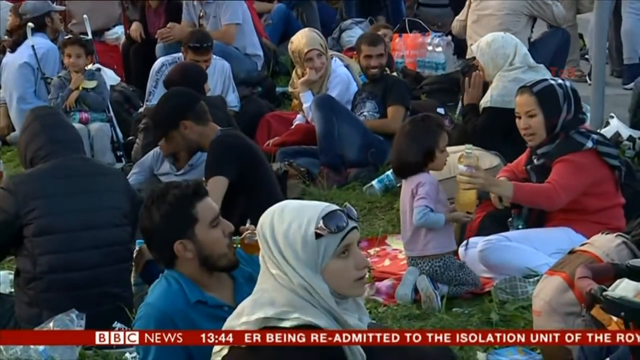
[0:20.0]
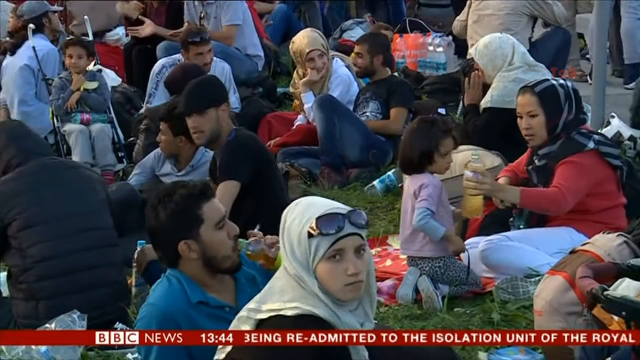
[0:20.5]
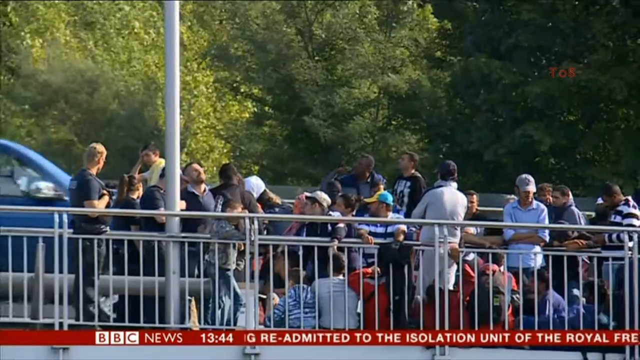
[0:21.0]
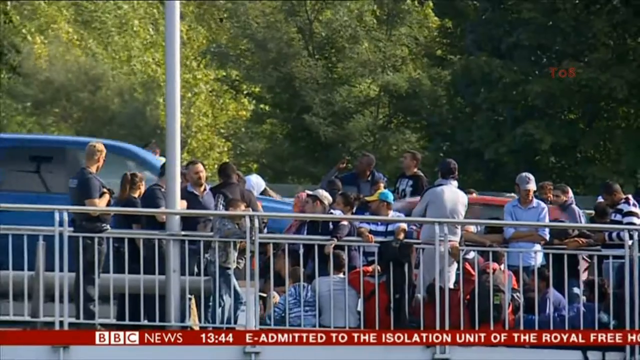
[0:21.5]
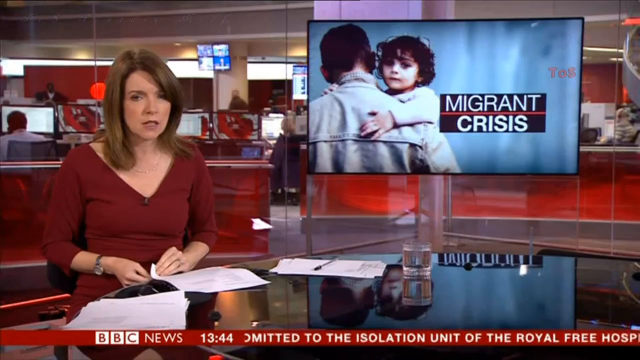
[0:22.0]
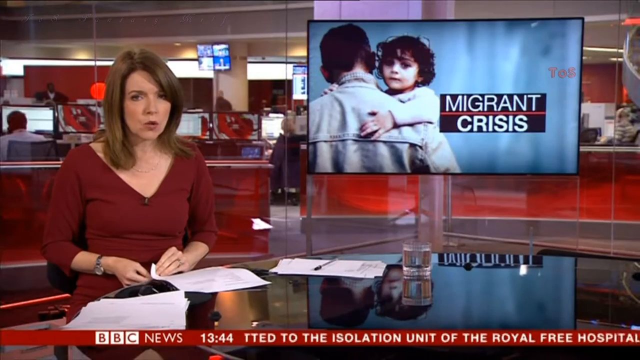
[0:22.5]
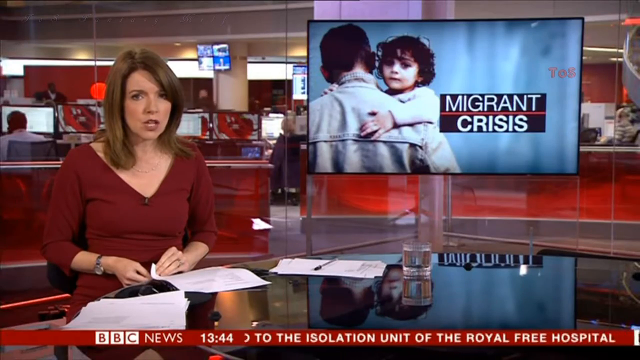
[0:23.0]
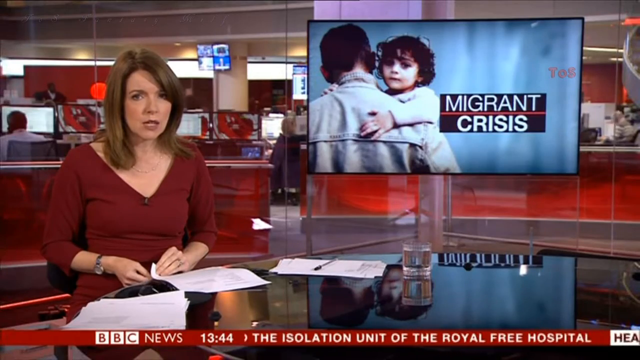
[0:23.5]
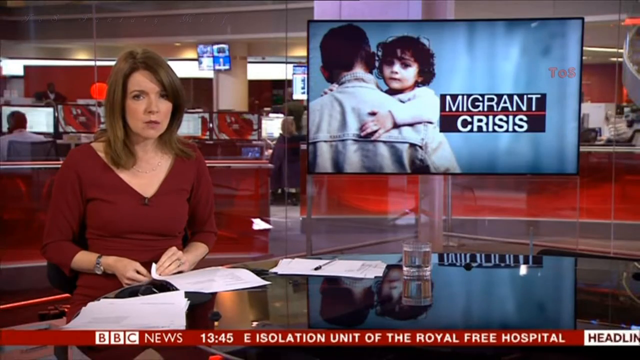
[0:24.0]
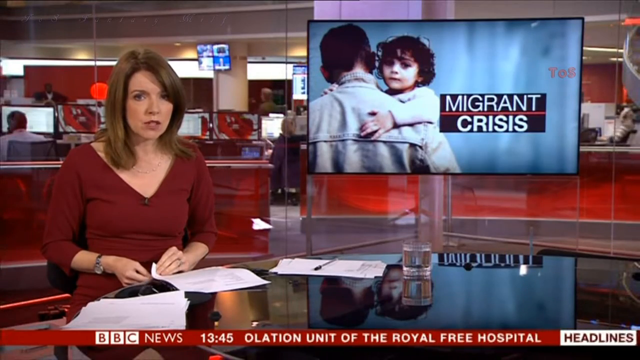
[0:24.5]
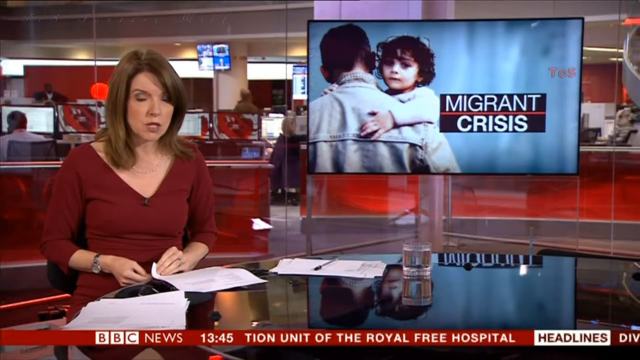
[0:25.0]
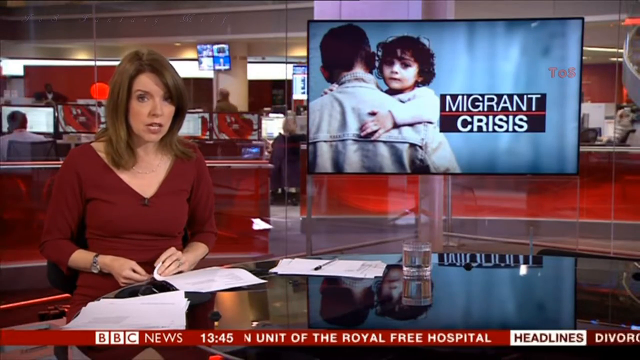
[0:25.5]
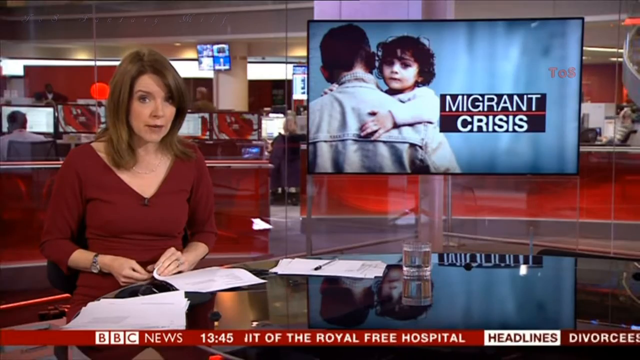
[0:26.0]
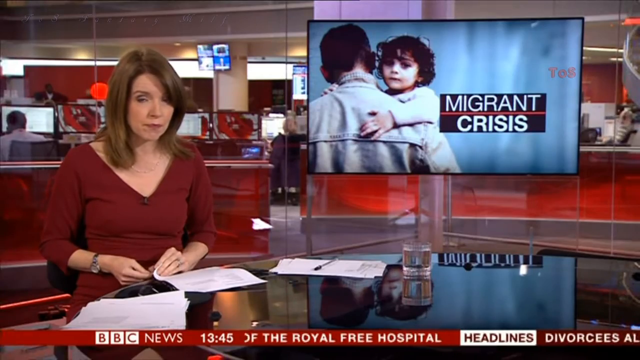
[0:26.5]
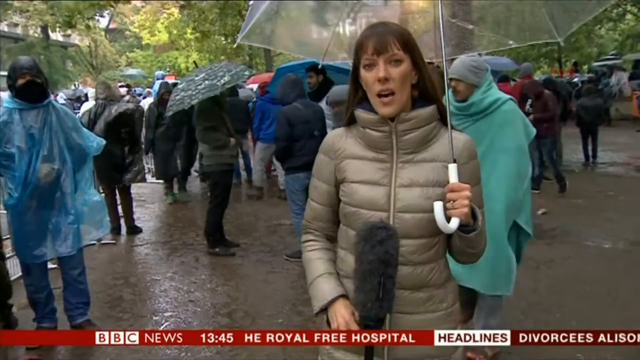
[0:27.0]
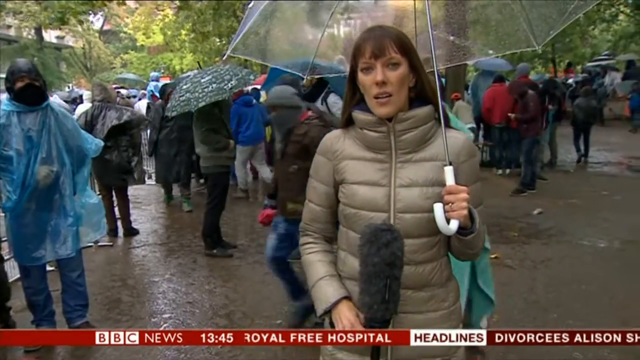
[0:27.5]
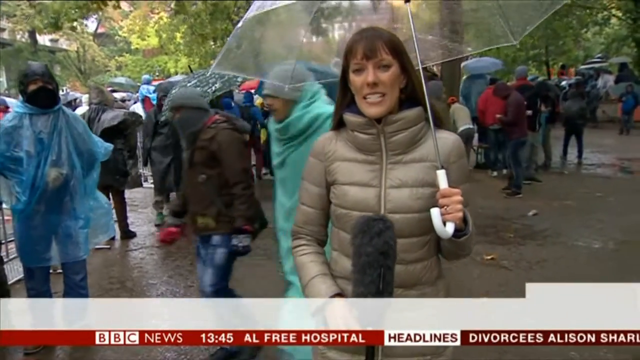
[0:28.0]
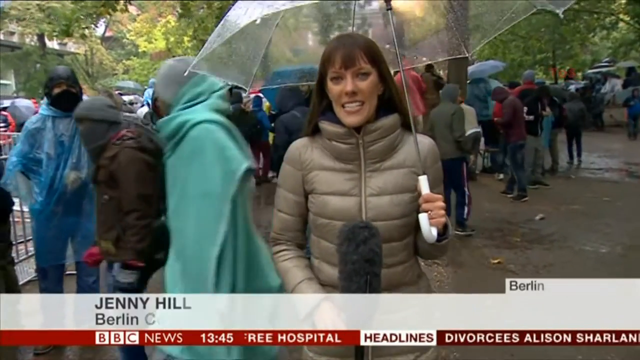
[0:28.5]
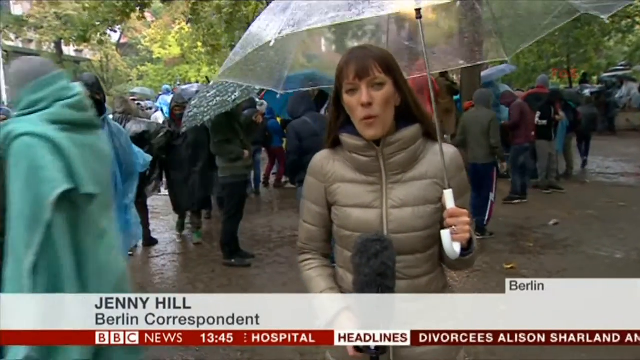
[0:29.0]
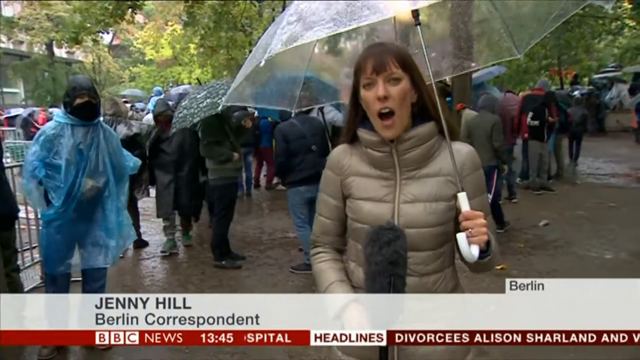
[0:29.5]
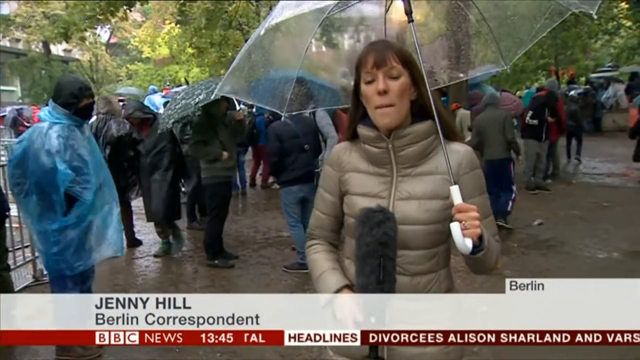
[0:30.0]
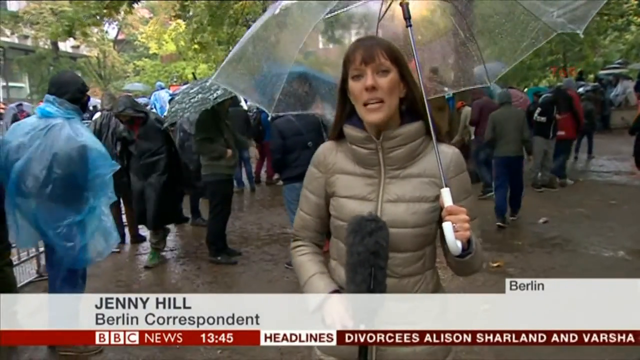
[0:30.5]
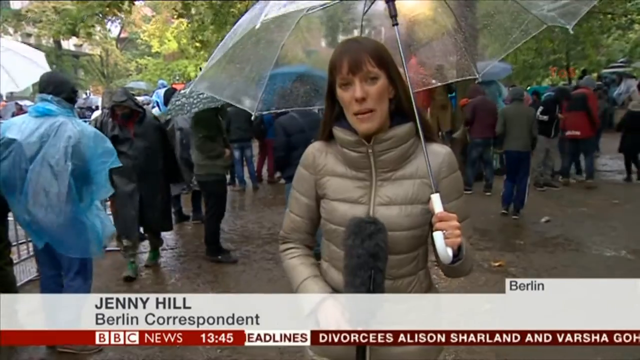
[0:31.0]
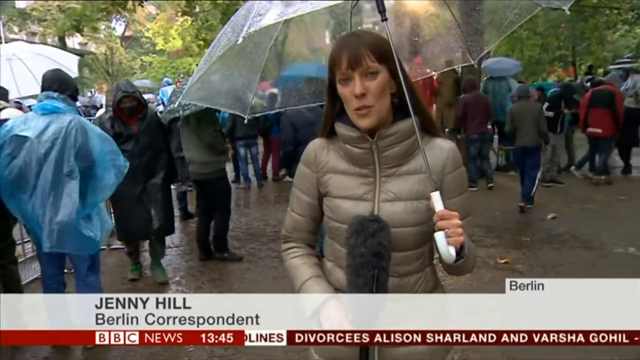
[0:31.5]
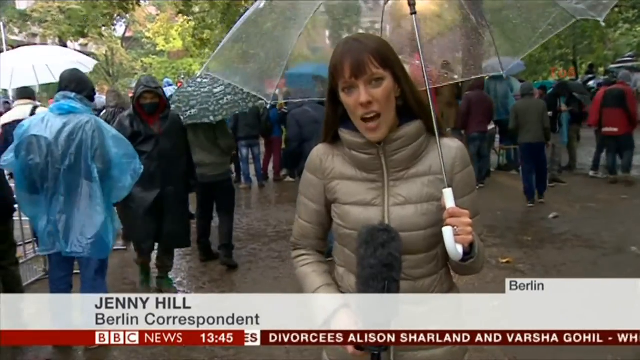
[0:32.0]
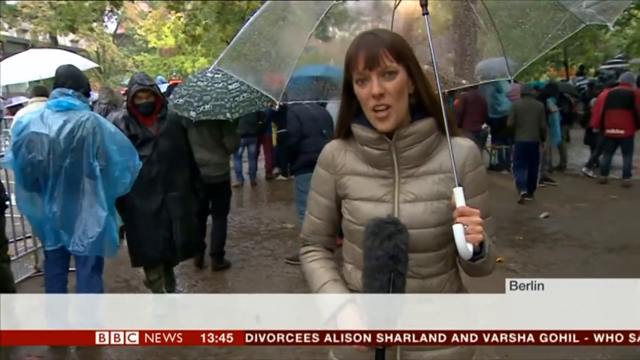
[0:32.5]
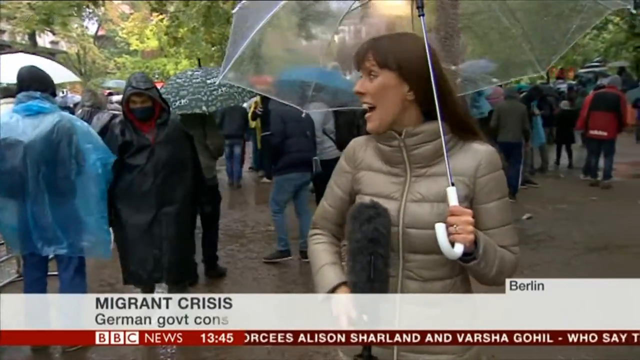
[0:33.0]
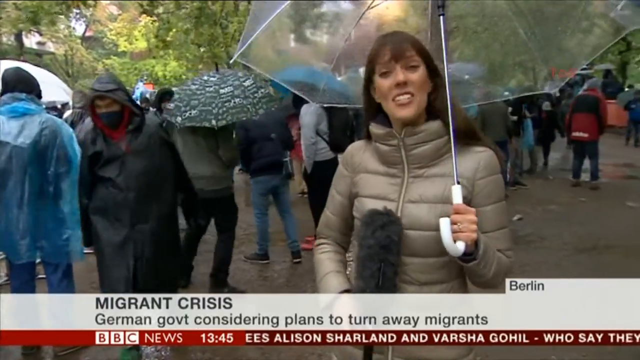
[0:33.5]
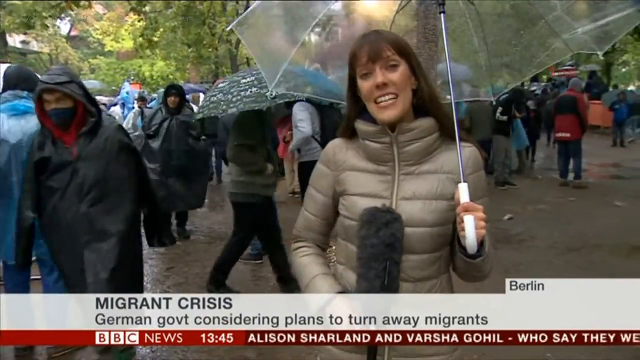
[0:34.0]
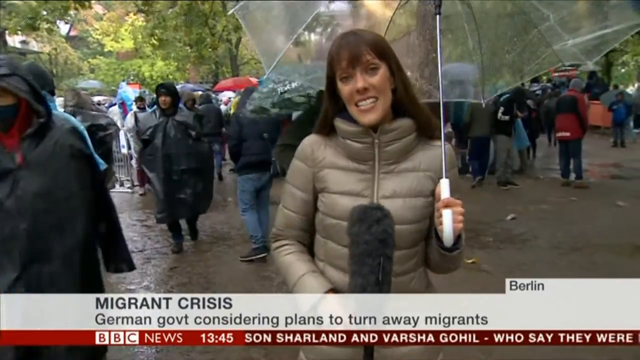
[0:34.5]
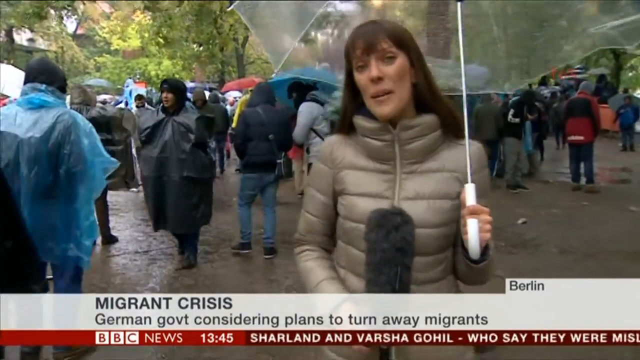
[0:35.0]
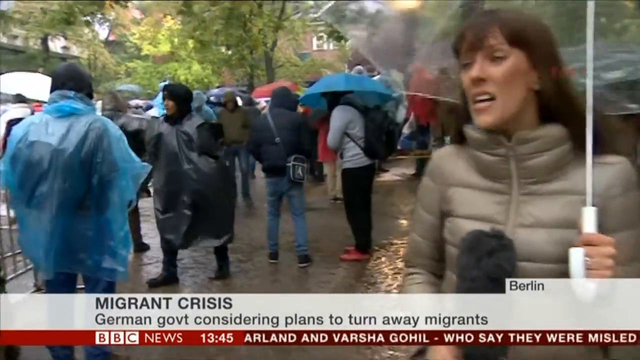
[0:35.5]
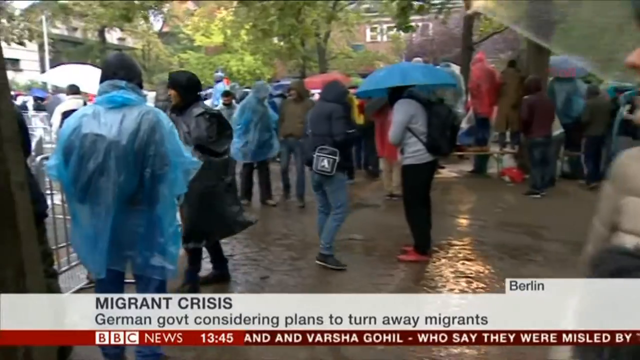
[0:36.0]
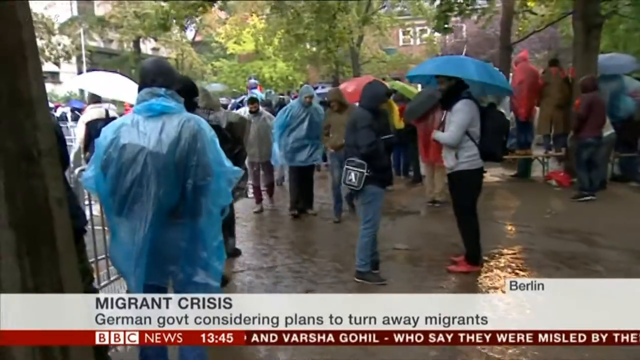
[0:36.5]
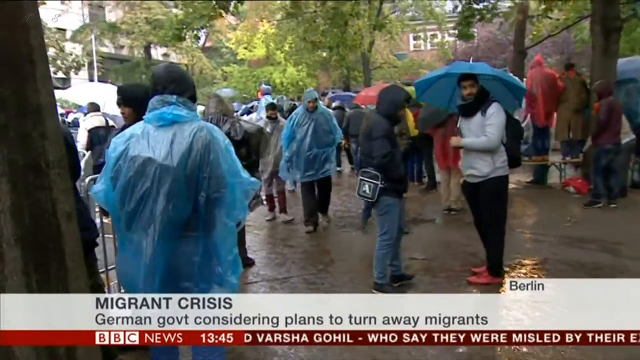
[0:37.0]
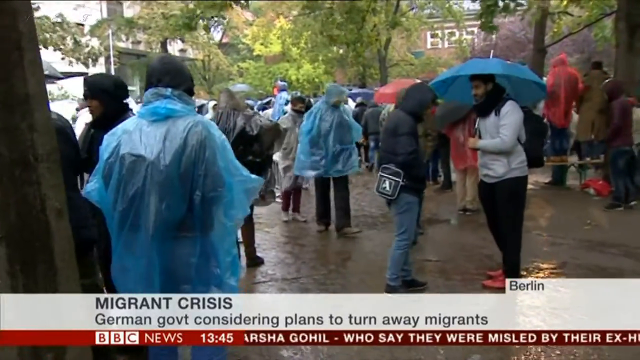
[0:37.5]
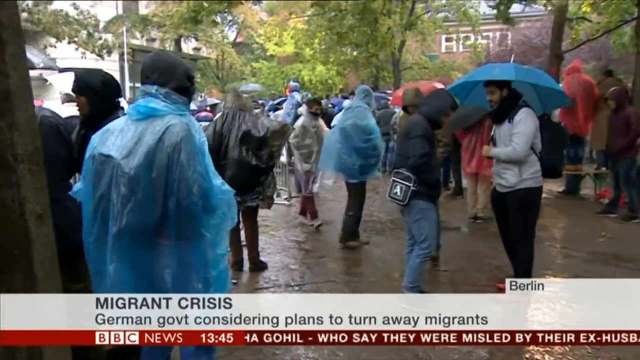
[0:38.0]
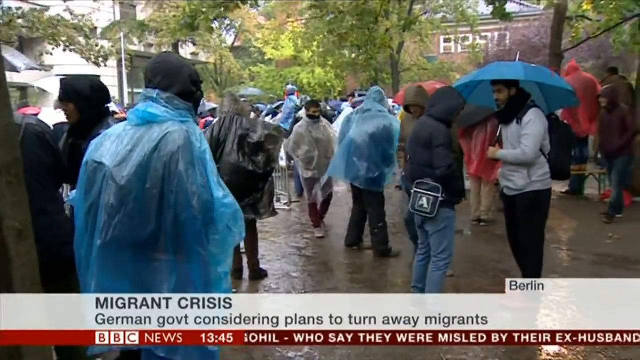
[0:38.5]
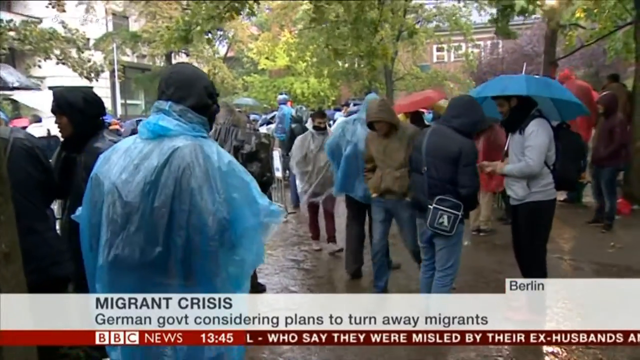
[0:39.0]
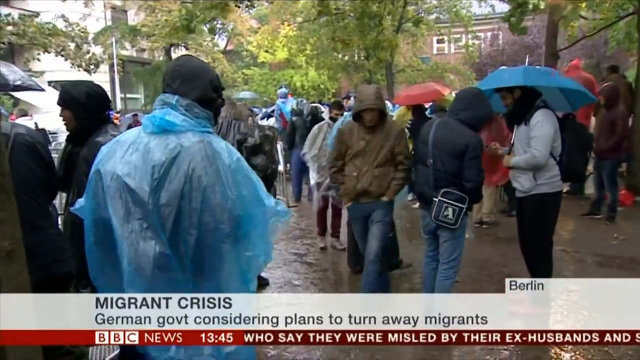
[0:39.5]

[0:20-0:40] Outside, the coverage shows men and women sitting on the grass, apparently at some type of event. The screen shows "migrant crisis". A news reporter named Jenny Hill wears a puffy light jacket and holds an umbrella and a large microphone. Text at the bottom of the screen reads "German government considering plans to turn away migrants", and "Berlin" appears on the side. It is raining, and people outside hold up umbrellas; some wear plastic raincoats that look like disposable, single-use ones. Some people walk back and forth. In the right-hand corner is what seems to be some type of vehicle, or possibly a plastic raincoat, next to a gate. Silver gates are put up.